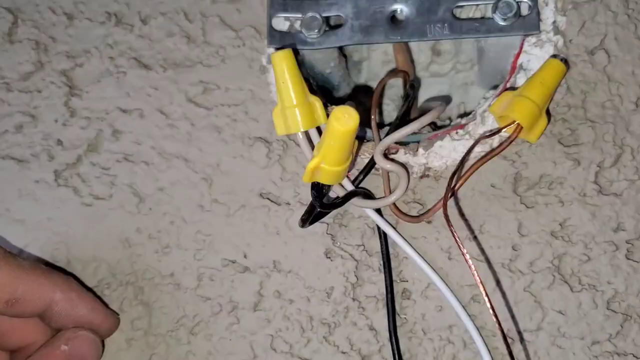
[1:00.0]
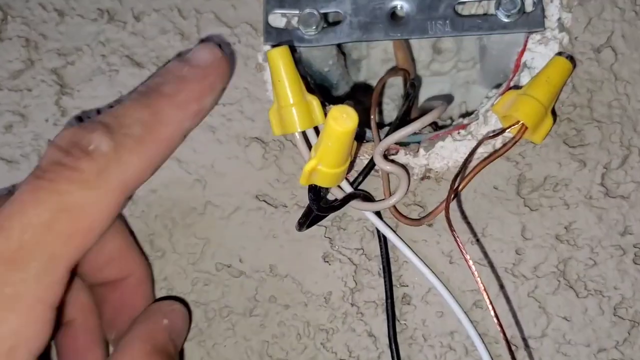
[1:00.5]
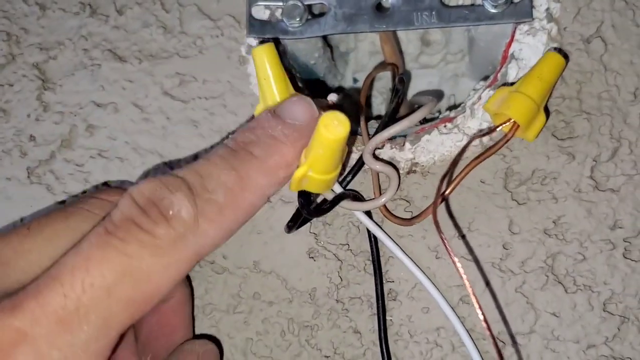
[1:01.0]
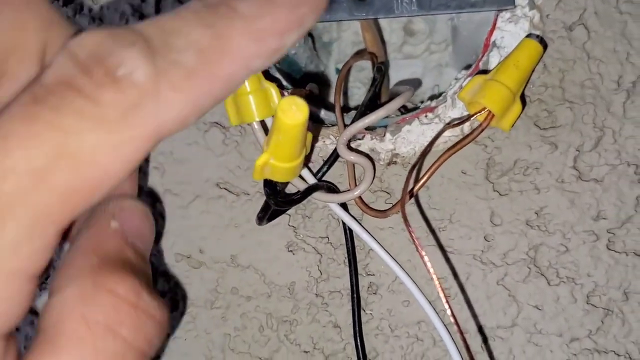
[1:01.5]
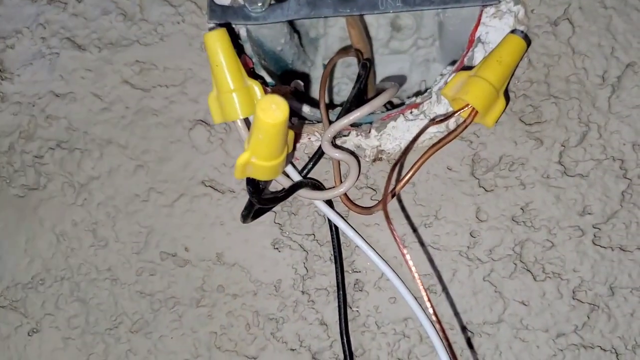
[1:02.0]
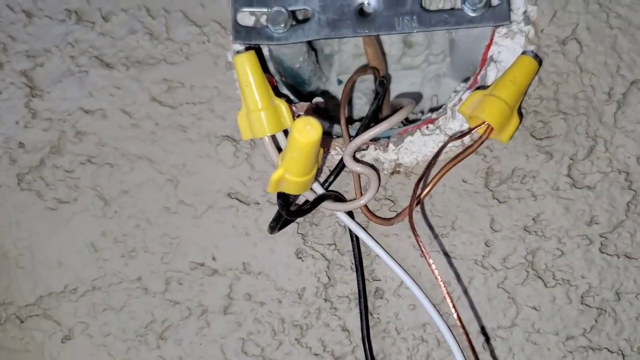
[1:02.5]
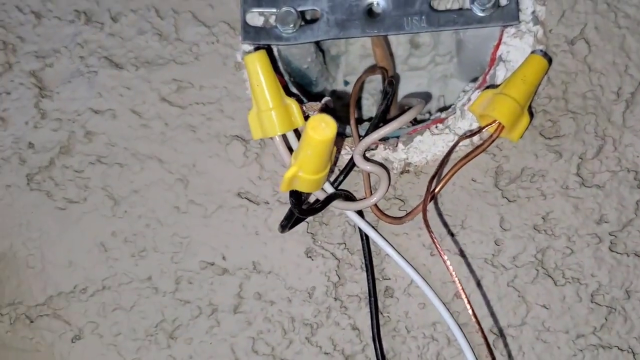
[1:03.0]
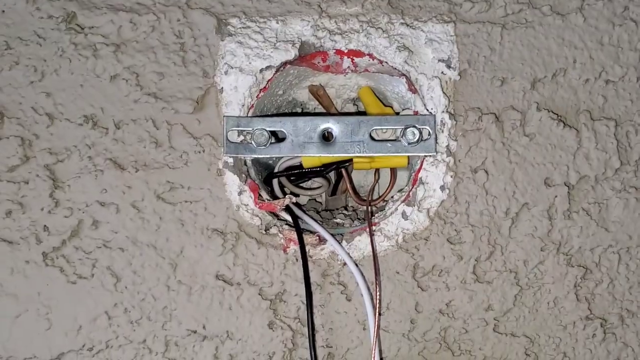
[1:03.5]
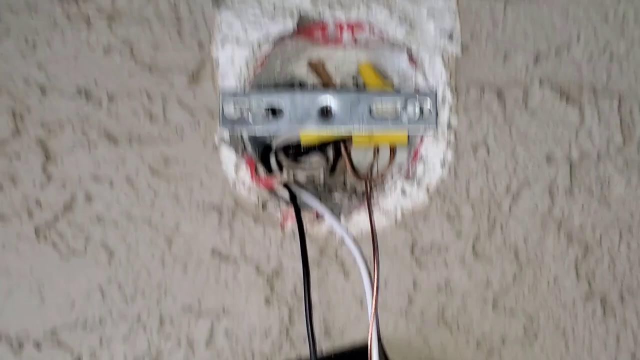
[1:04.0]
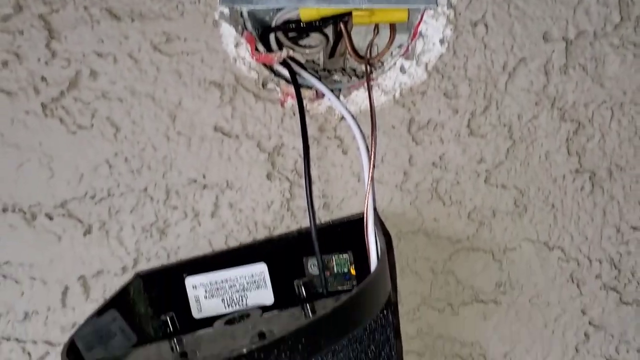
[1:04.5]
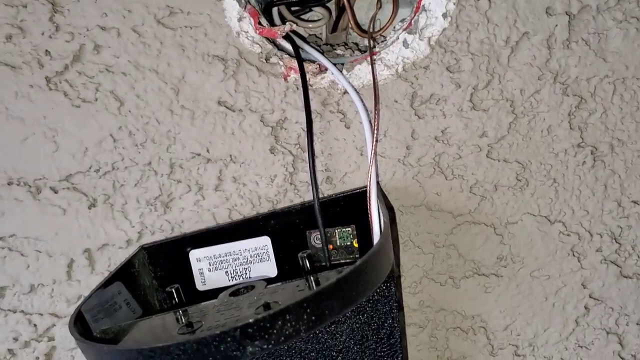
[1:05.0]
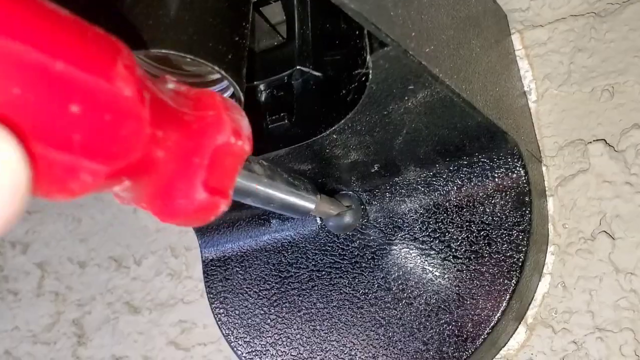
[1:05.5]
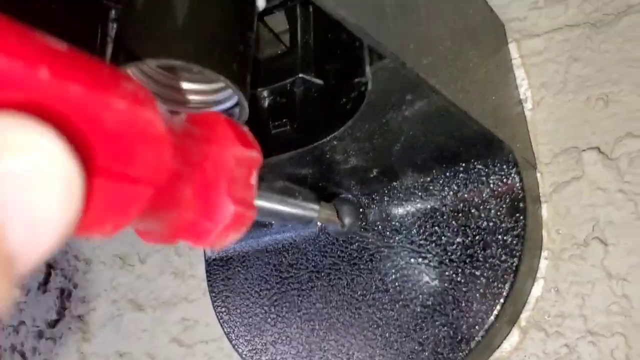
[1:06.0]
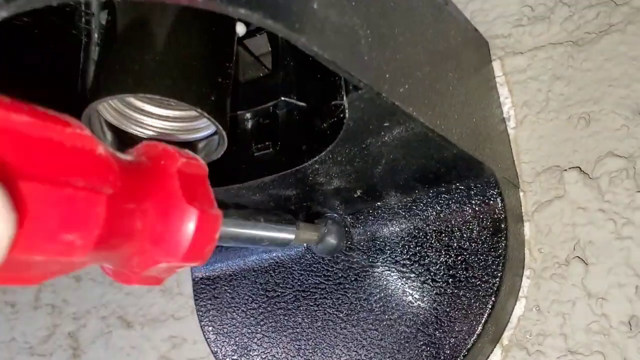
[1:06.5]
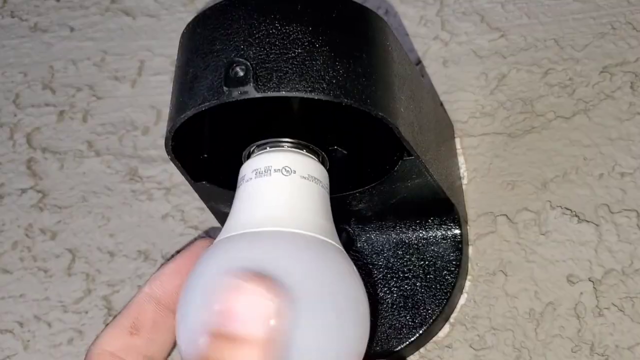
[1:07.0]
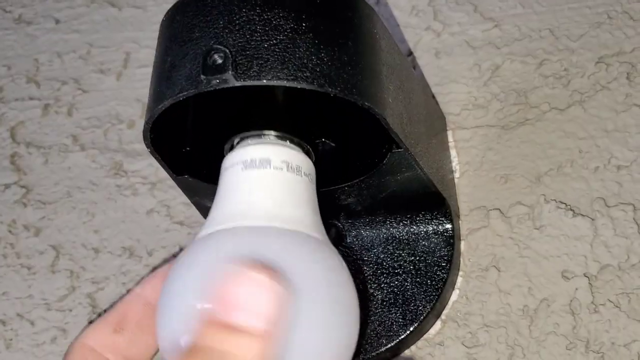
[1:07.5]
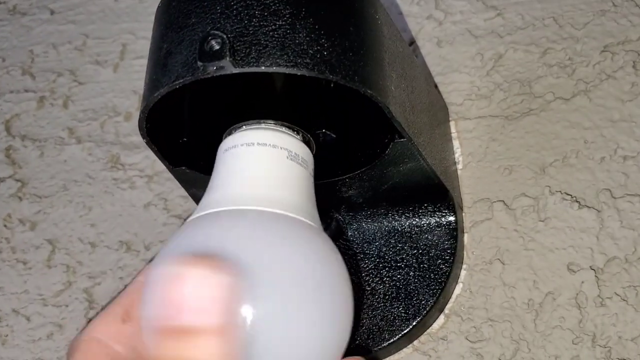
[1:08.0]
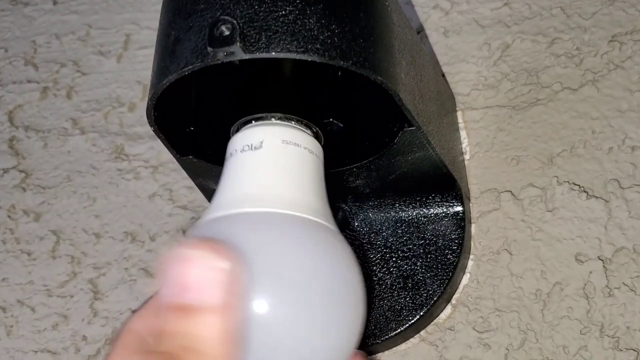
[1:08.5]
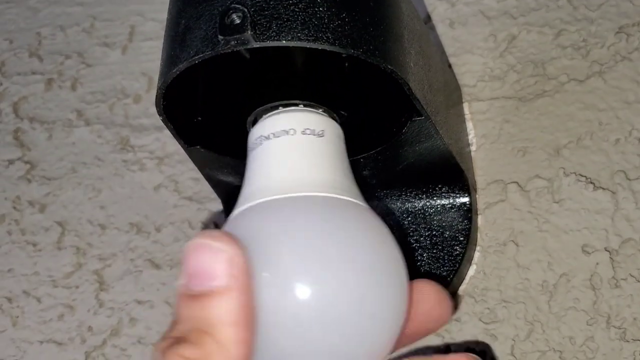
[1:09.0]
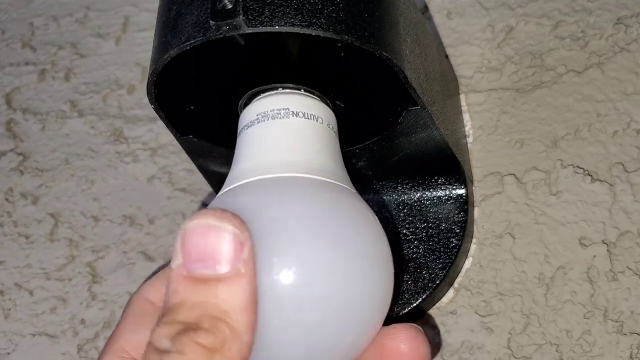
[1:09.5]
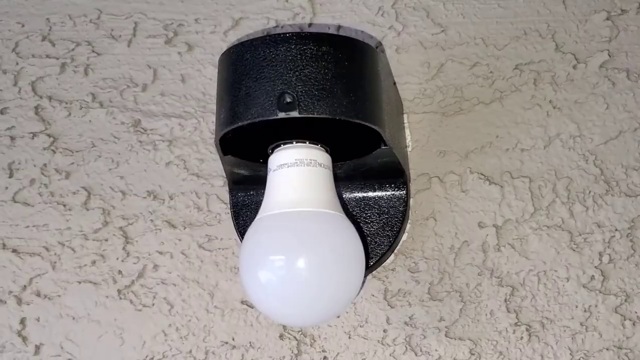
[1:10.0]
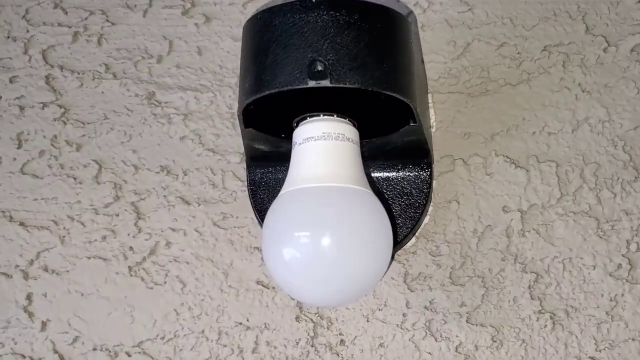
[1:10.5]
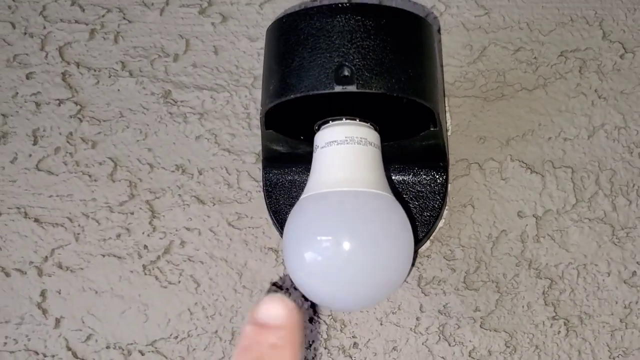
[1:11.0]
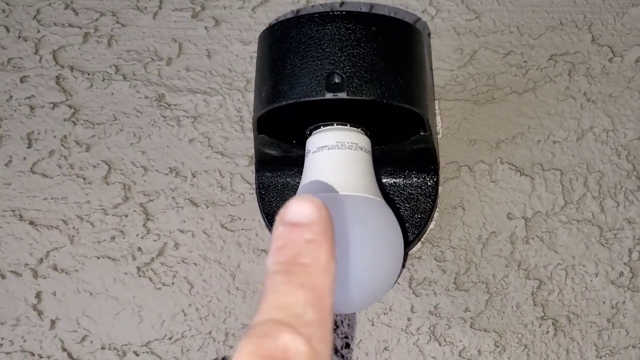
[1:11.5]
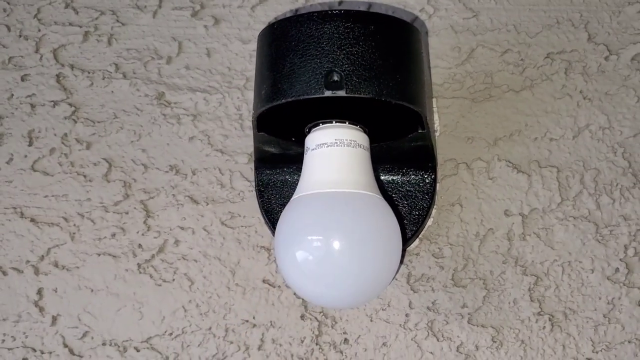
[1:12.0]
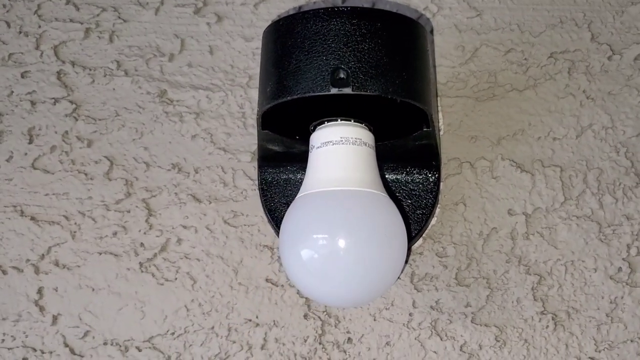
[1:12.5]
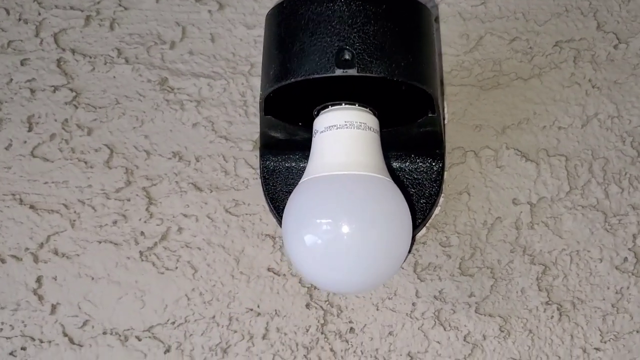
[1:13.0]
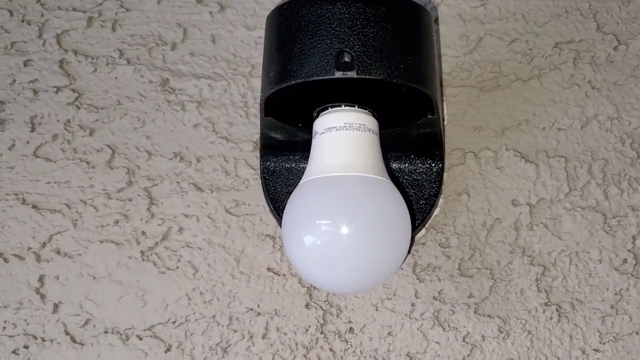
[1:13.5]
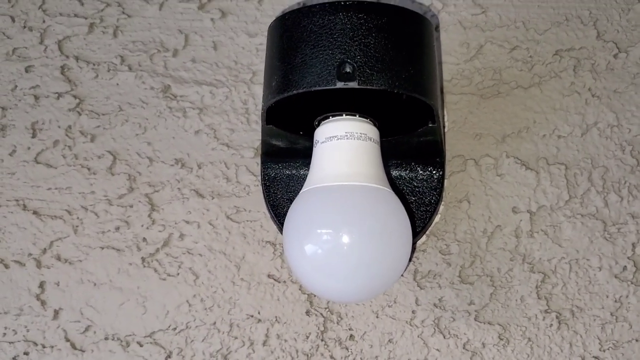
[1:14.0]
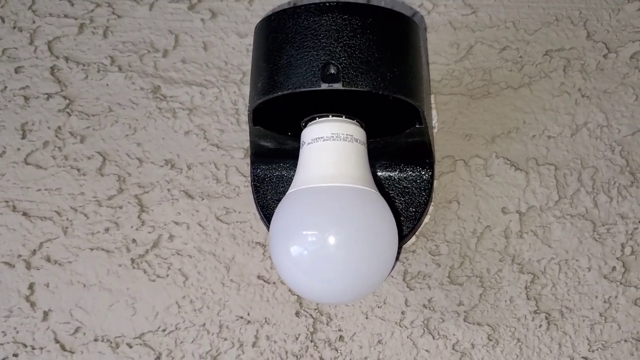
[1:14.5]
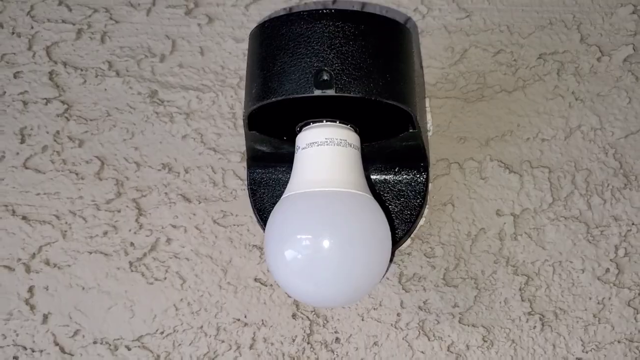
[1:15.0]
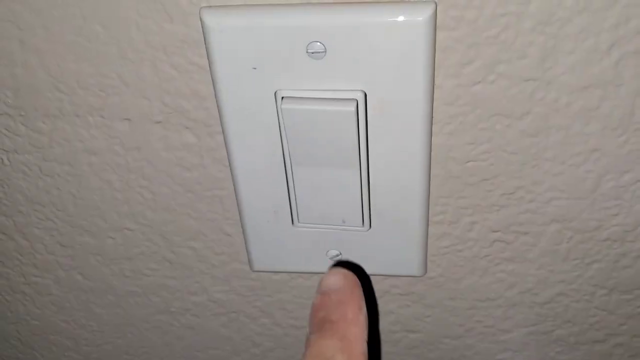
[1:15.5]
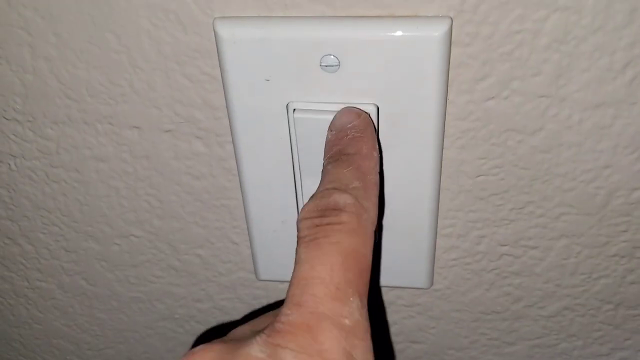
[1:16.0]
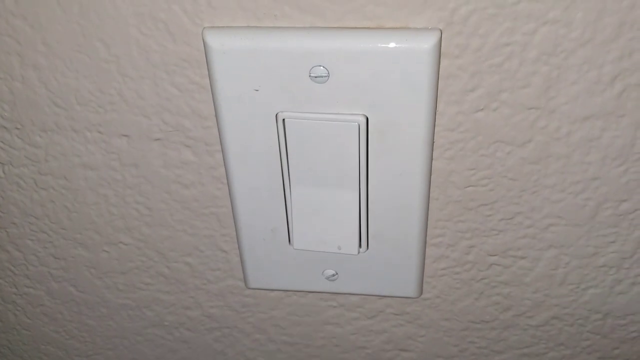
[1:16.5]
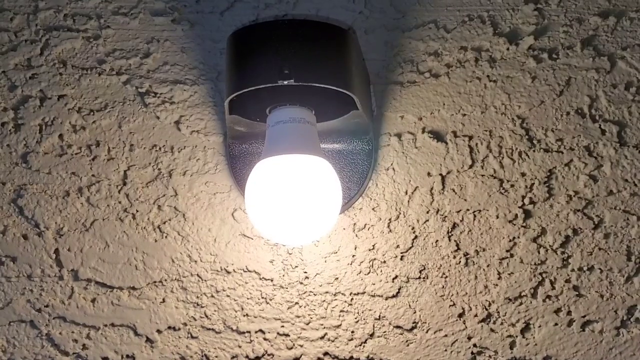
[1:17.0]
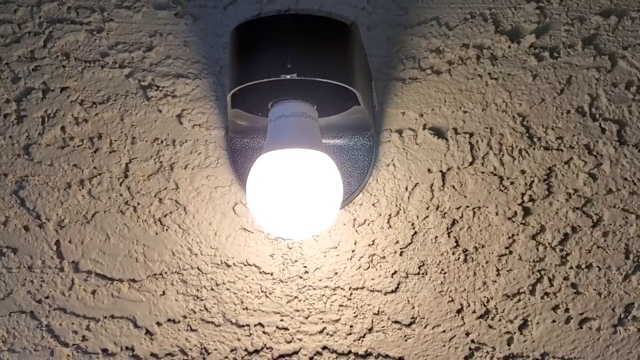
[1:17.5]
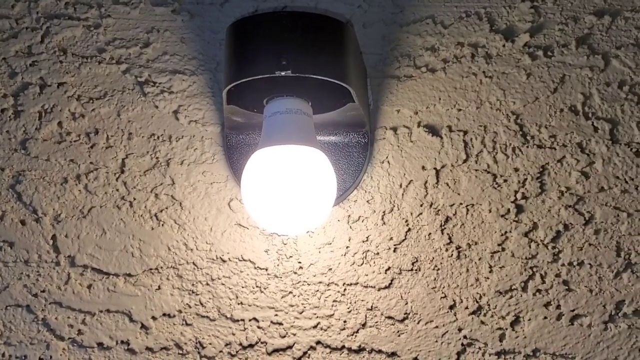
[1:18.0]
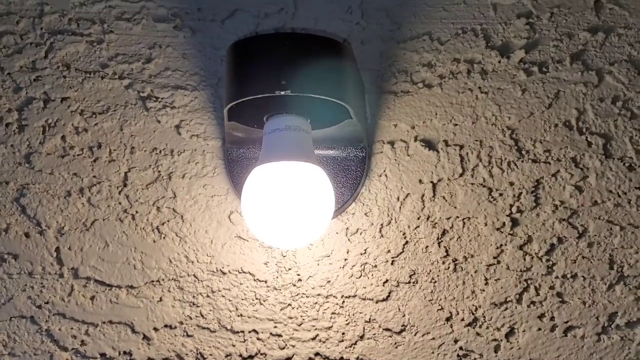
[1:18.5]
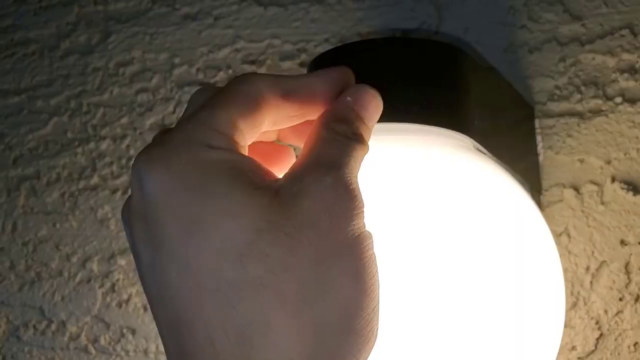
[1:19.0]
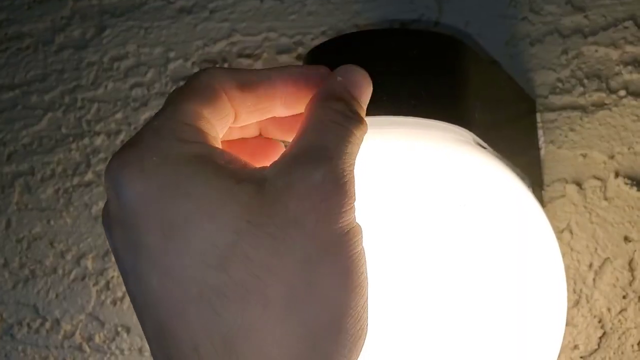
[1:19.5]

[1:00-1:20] New yellow blocks appear, and the cables are connected to those of the lamp or bulb. There are three connectors, and the man pushes them into the hole. A lamp is shown. He installs the lamp holder, which is black, with the help of a screwdriver. After fixing it, he fits the lamp with a bulb in it, and he is probably saying something about the bulb. He then flips the switch and the lights come on. He also screws something at the top, making sure it is fixed well.